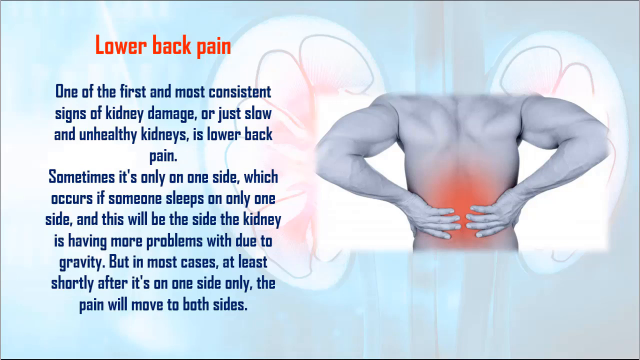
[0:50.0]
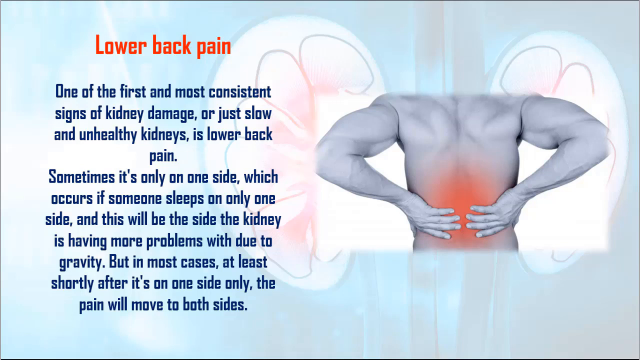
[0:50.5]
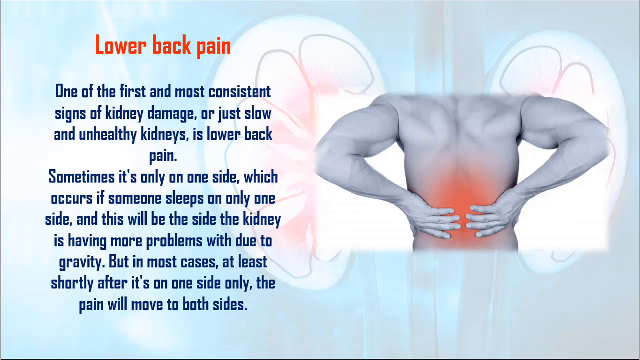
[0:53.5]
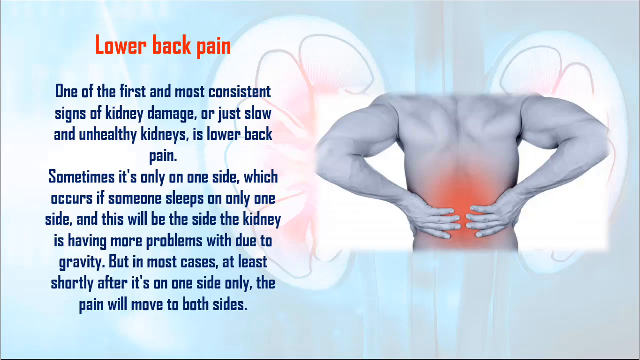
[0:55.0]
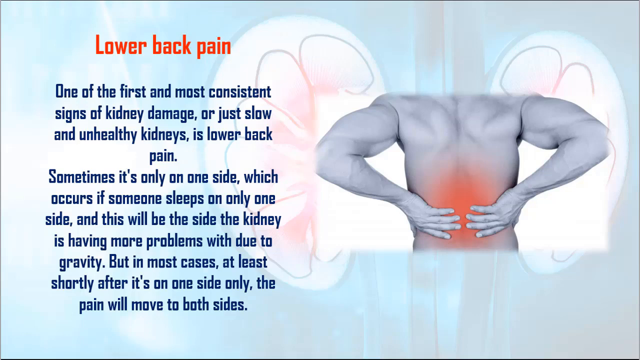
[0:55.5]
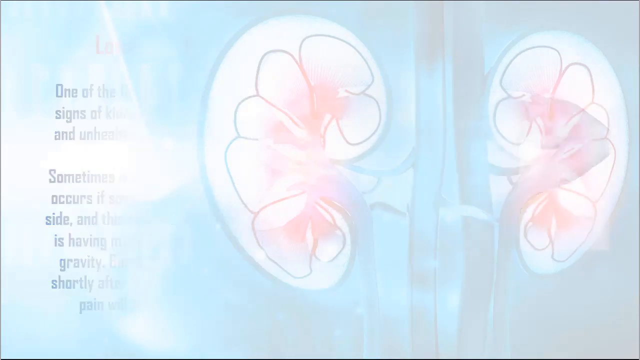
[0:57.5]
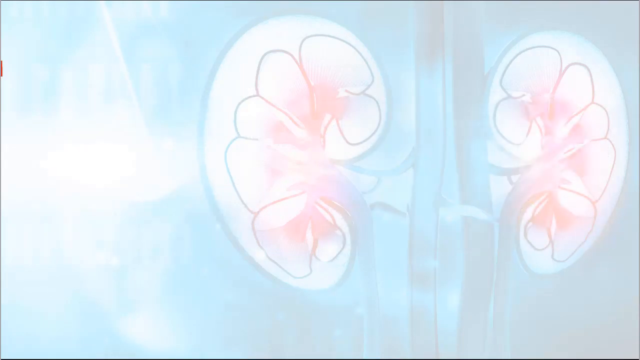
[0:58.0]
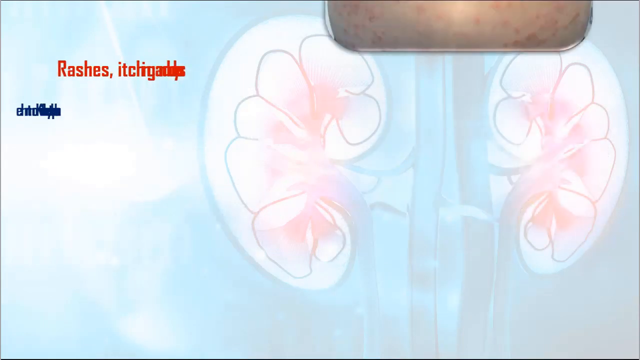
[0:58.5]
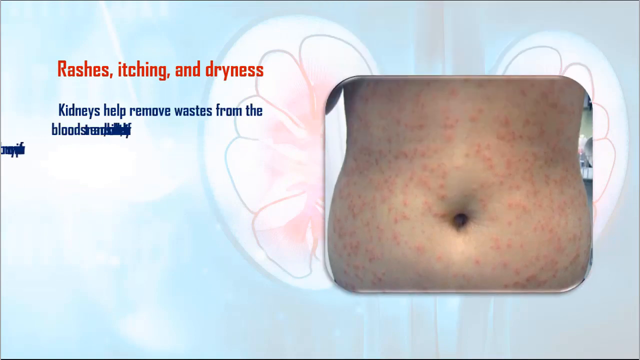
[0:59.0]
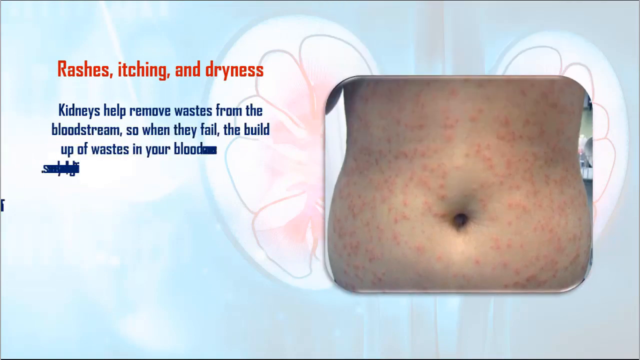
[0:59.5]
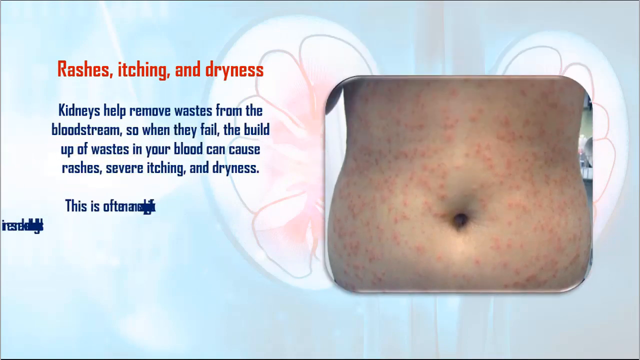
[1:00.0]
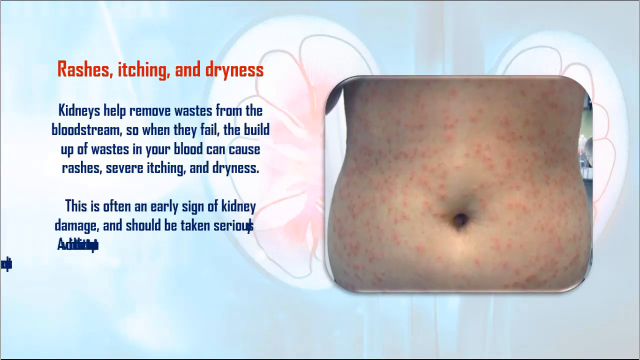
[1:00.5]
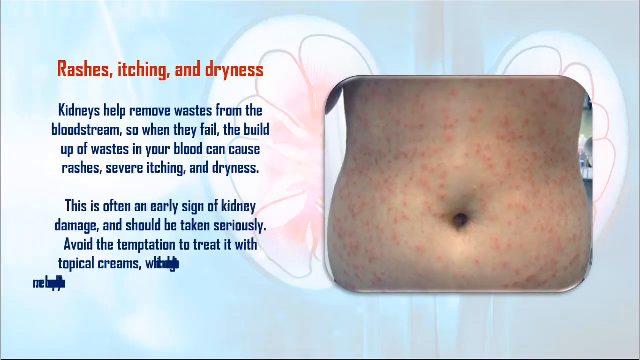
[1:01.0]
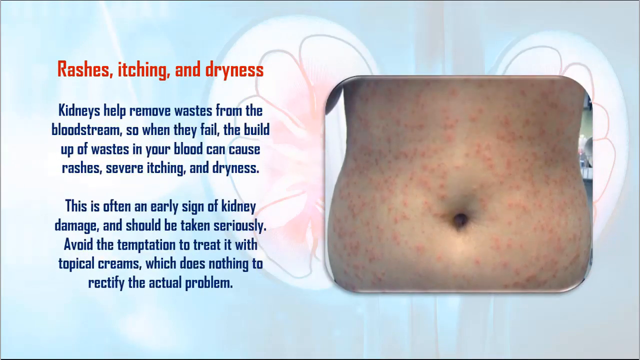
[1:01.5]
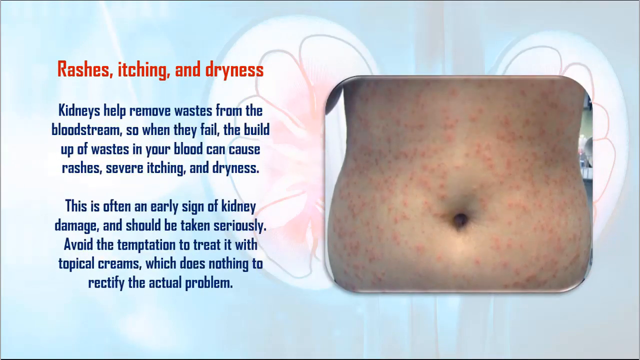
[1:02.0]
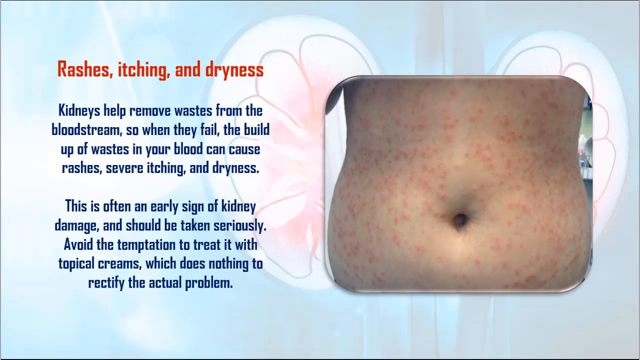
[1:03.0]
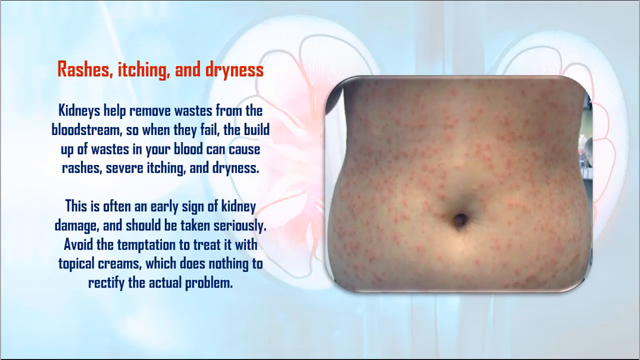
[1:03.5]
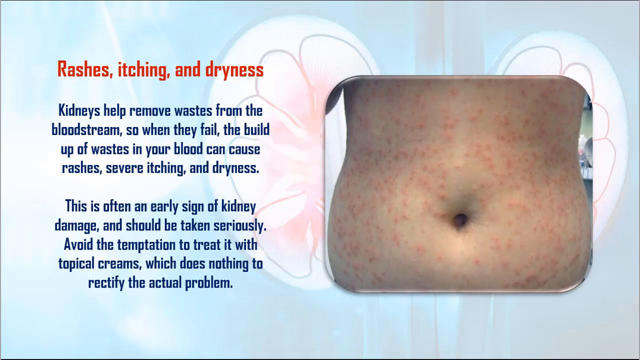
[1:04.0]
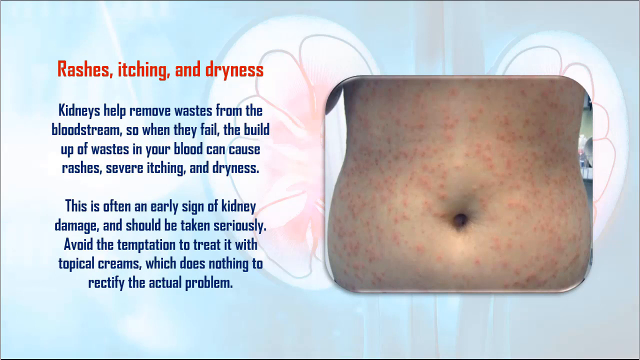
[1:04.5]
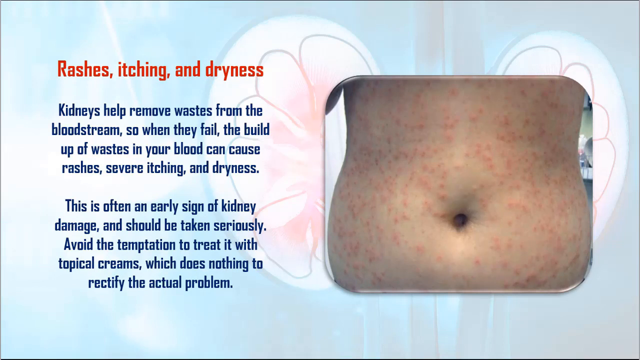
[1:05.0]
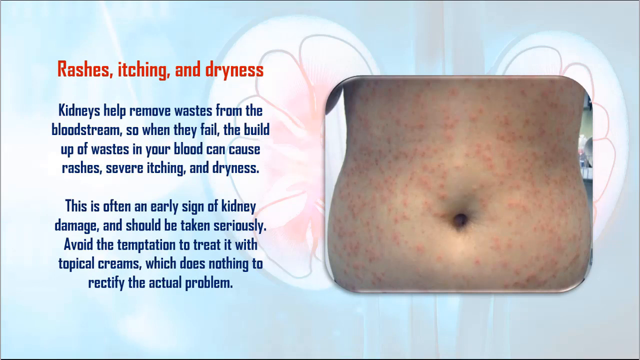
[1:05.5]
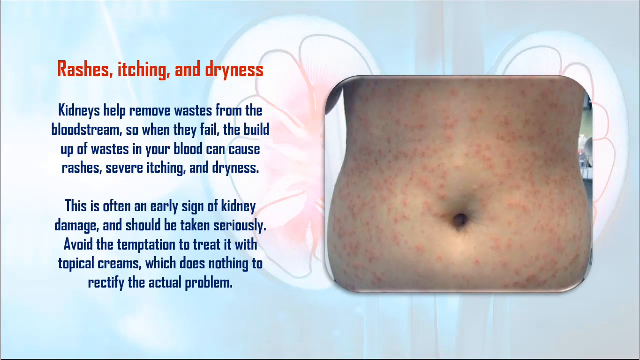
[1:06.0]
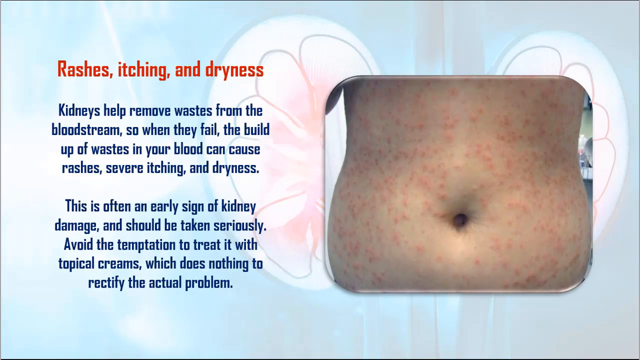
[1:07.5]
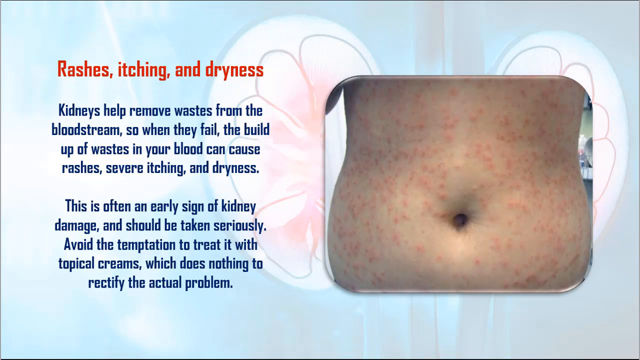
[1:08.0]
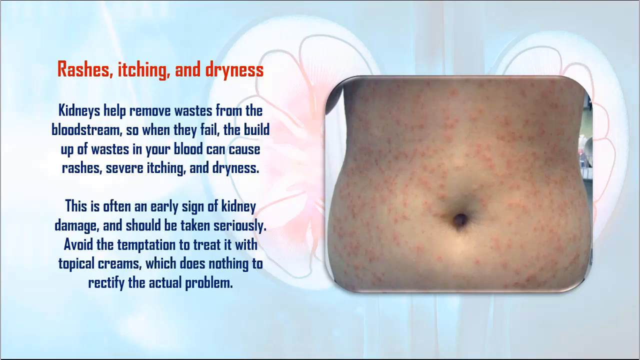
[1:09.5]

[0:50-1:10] Two drawn kidneys are in the background on a mostly blue background. The kidneys are mostly white, with little ovals drawn in black in their centers and some areas of pink within the ovals. On the right side is a white rectangle with a picture of a shirtless man's upper torso seen from the back. Red radiates at the bottom of his back, and he is holding his back in that red area. His skin is a mostly grayish color. On the left side is text with a red title at the top reading "lower back pain", and beneath it two paragraphs about how a consistent sign of kidney damage is lower back pain. The image and text stay for a few seconds and then disappear. A picture of a person's belly, covered with a red rash, appears on the right side of the screen, partially covering the kidneys in the background. On the left side, text appears with a red title reading "rashes, itching, and dryness", and below it two paragraphs explaining that kidneys help remove waste from the bloodstream, and when they fail, the waste builds up in the blood, which can cause rashes, severe itchiness, and dryness.